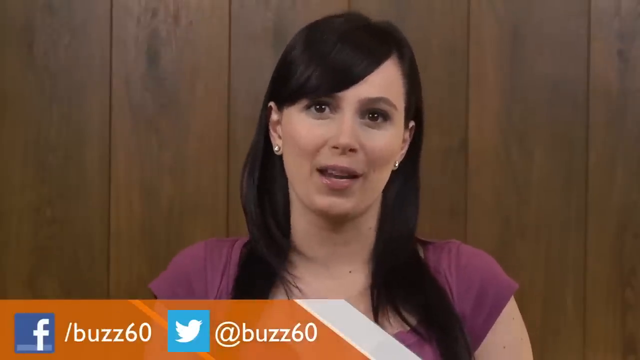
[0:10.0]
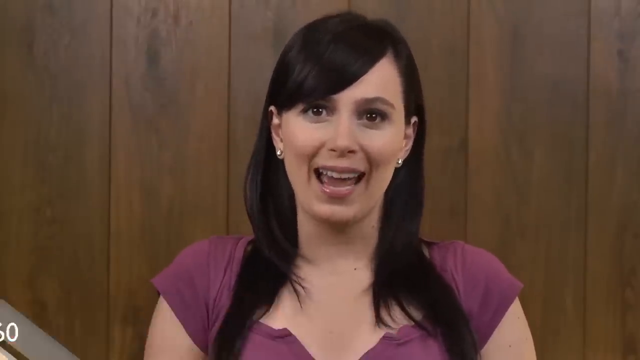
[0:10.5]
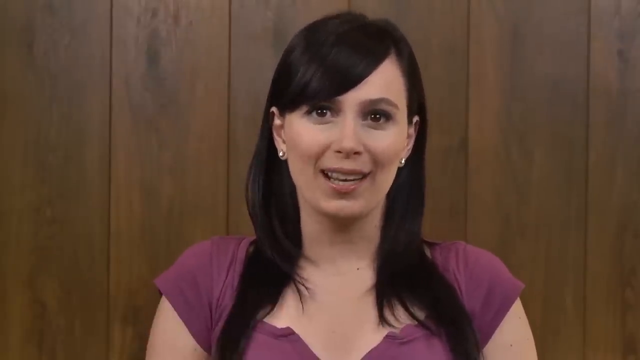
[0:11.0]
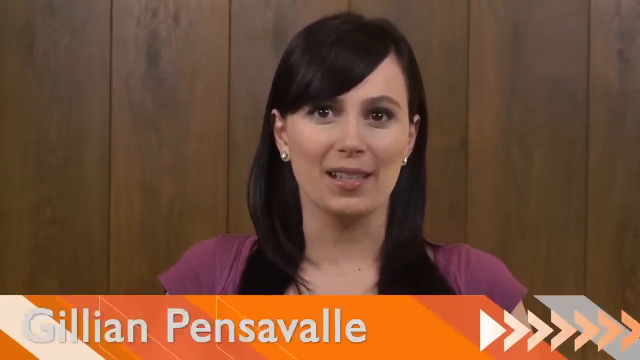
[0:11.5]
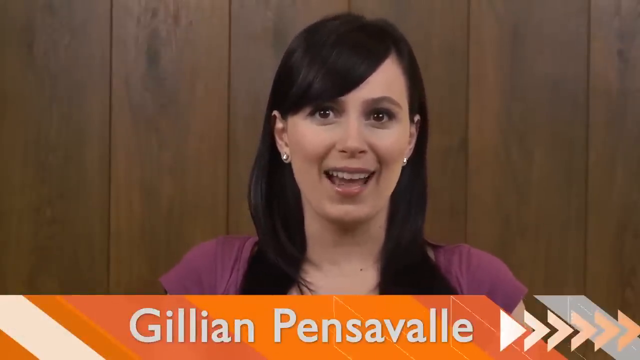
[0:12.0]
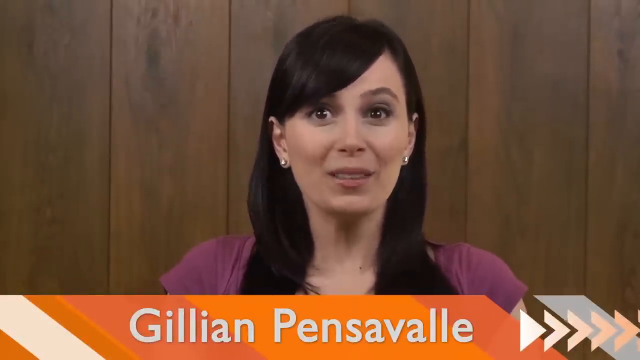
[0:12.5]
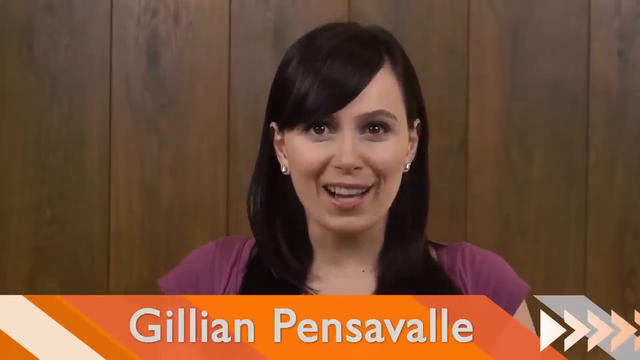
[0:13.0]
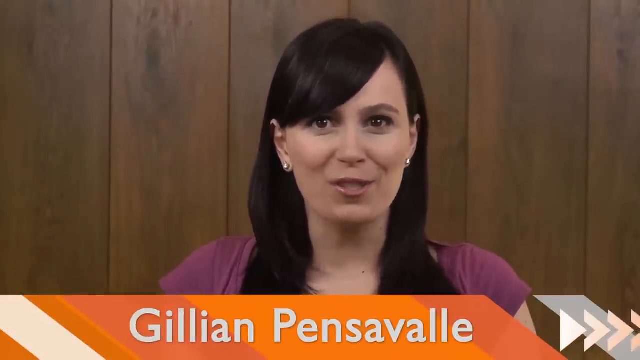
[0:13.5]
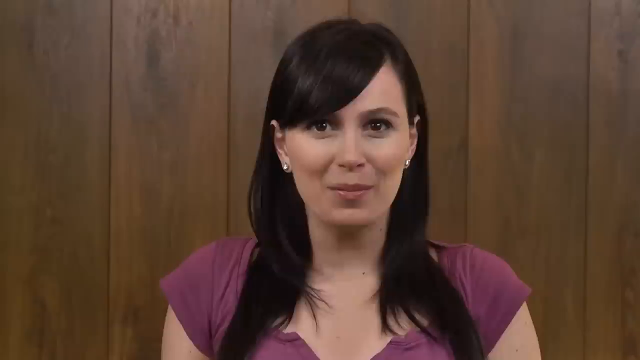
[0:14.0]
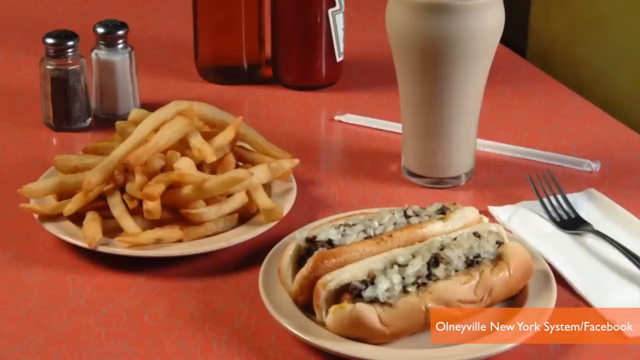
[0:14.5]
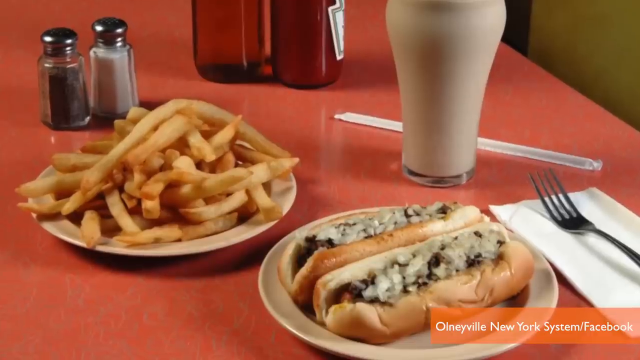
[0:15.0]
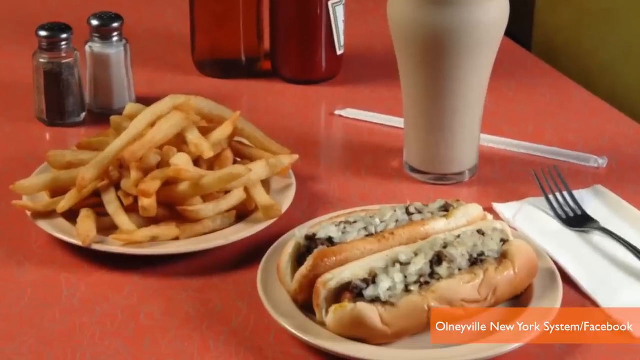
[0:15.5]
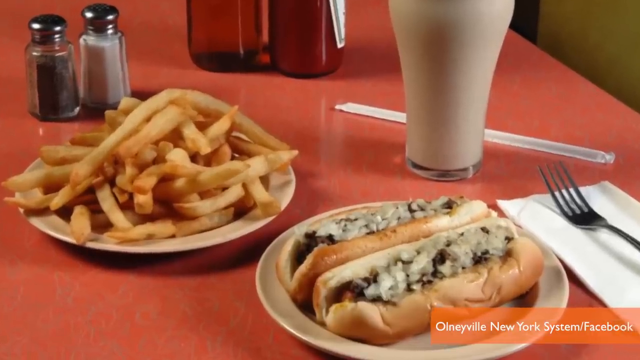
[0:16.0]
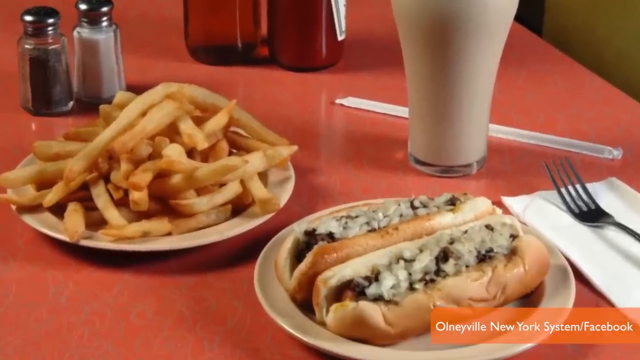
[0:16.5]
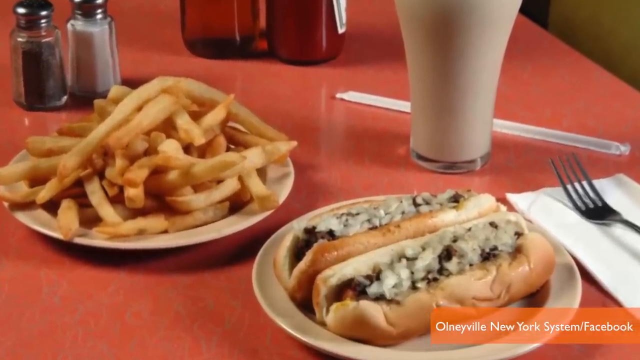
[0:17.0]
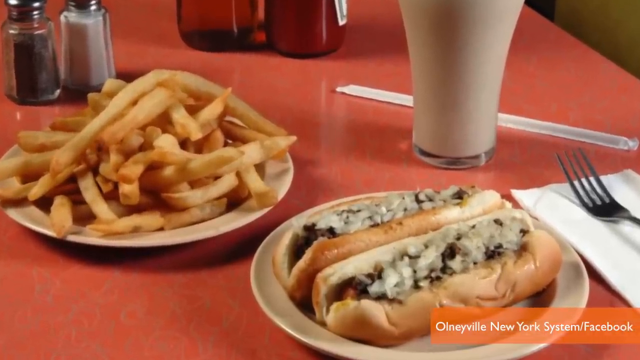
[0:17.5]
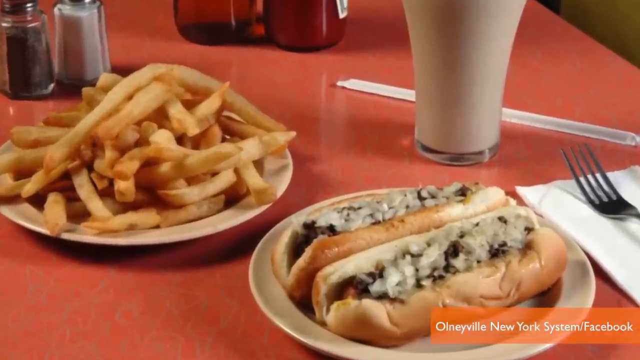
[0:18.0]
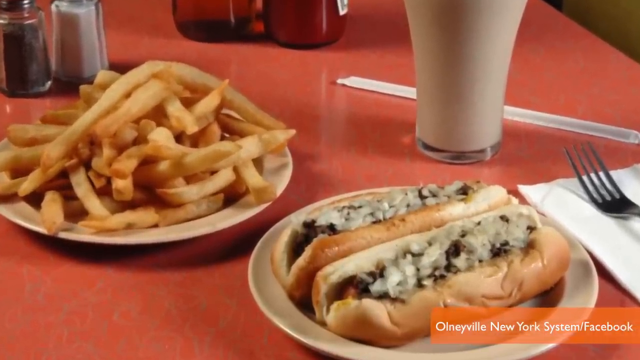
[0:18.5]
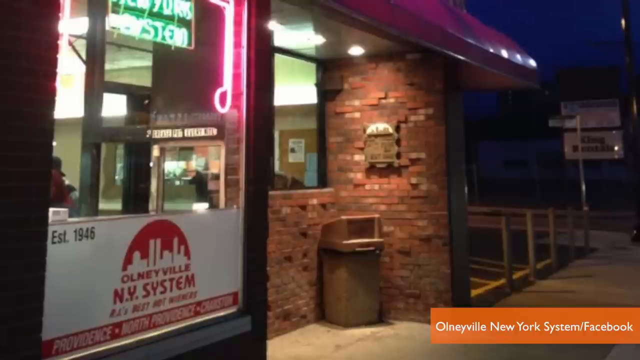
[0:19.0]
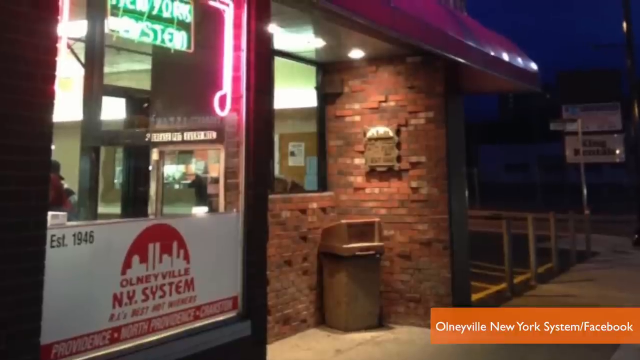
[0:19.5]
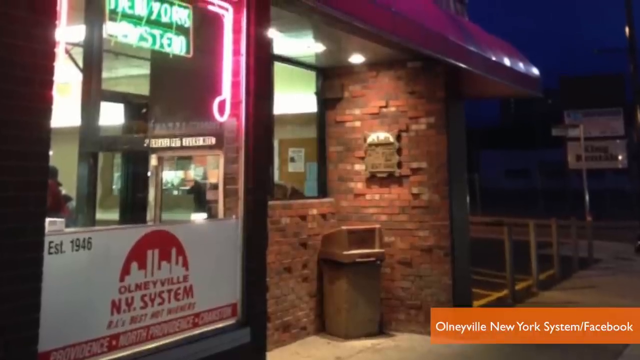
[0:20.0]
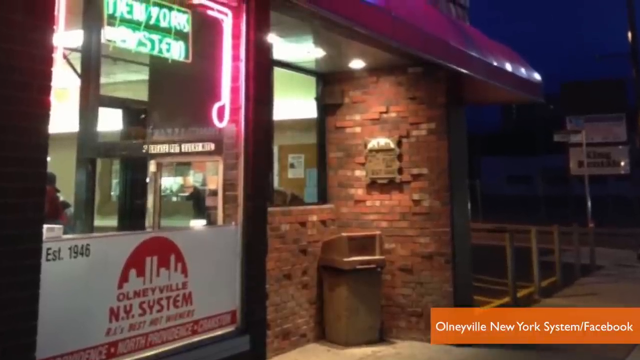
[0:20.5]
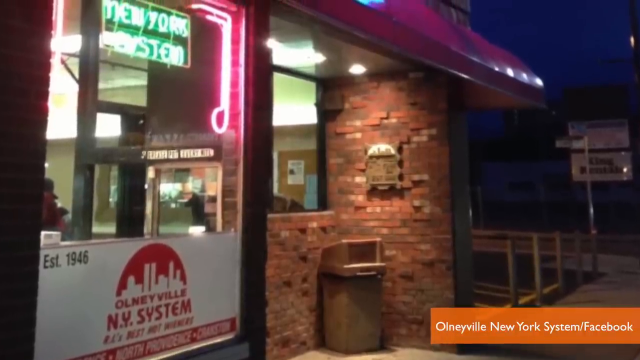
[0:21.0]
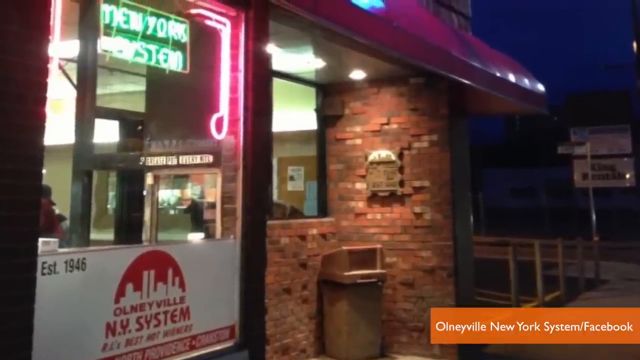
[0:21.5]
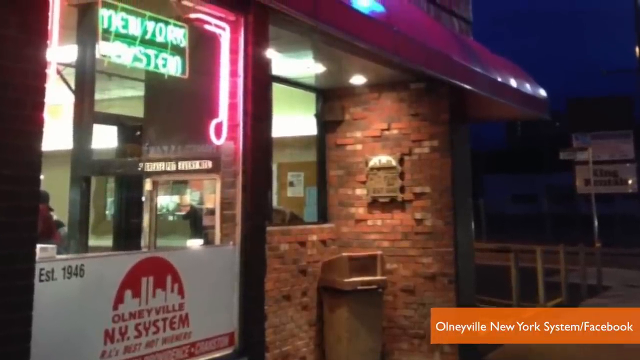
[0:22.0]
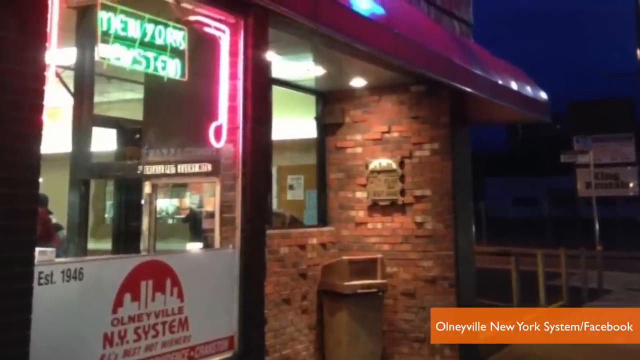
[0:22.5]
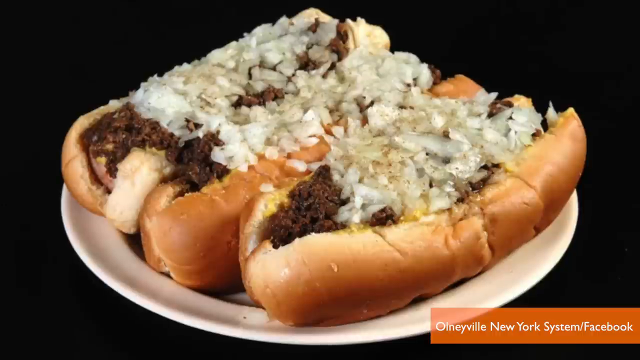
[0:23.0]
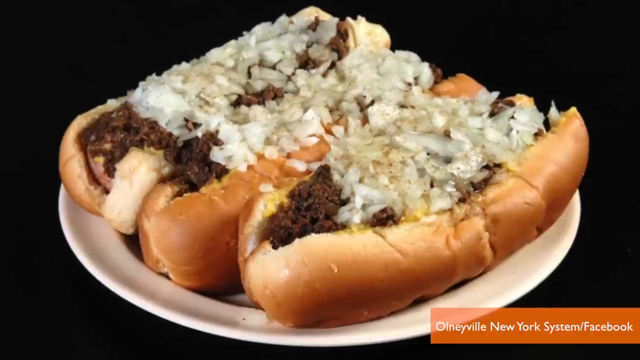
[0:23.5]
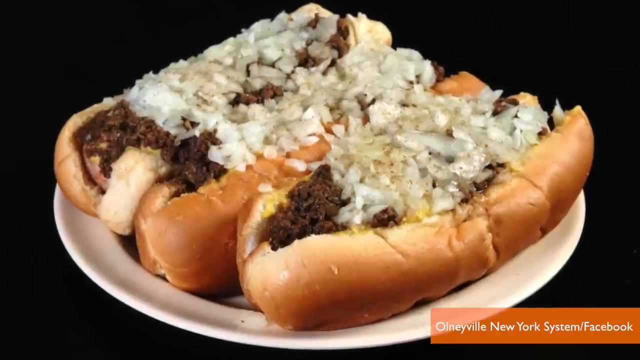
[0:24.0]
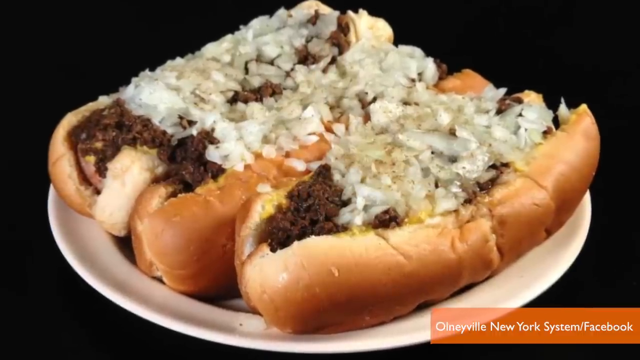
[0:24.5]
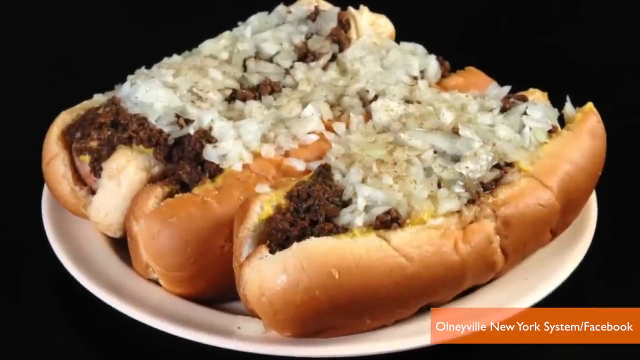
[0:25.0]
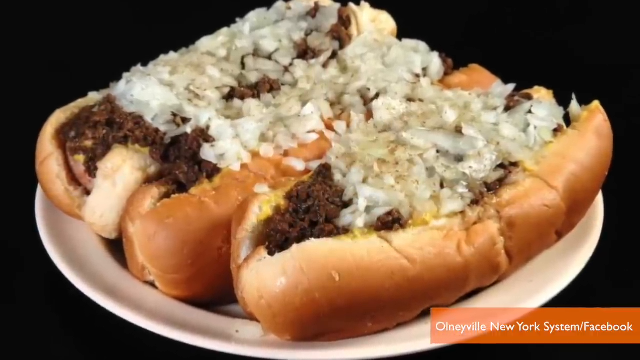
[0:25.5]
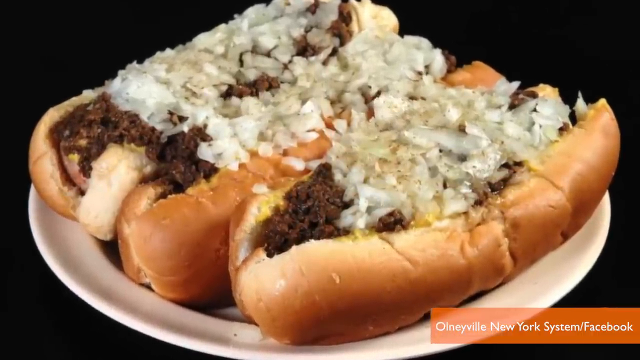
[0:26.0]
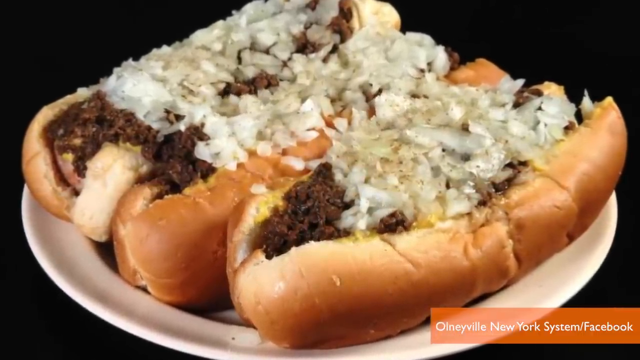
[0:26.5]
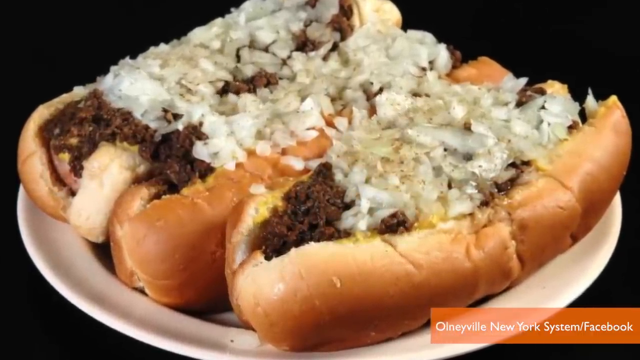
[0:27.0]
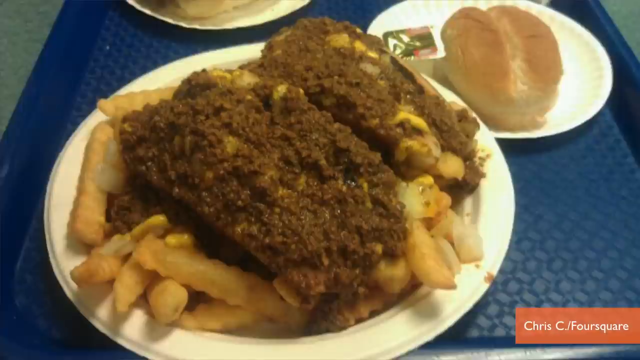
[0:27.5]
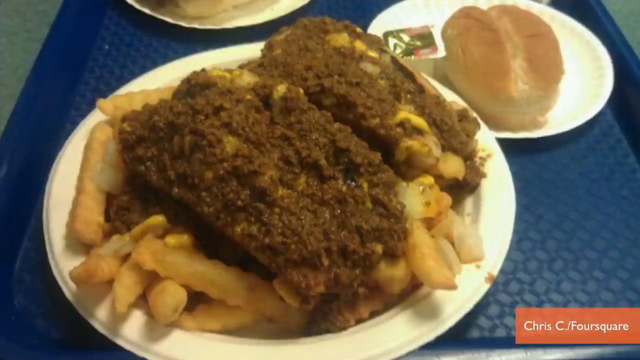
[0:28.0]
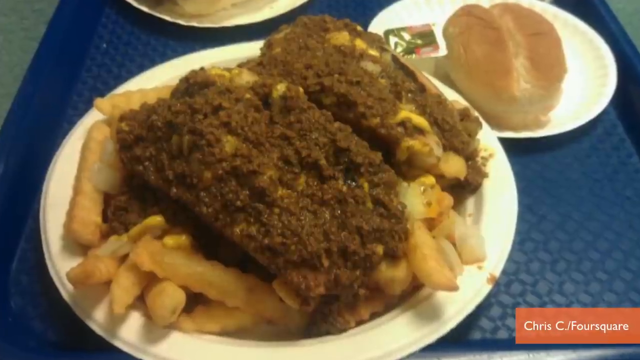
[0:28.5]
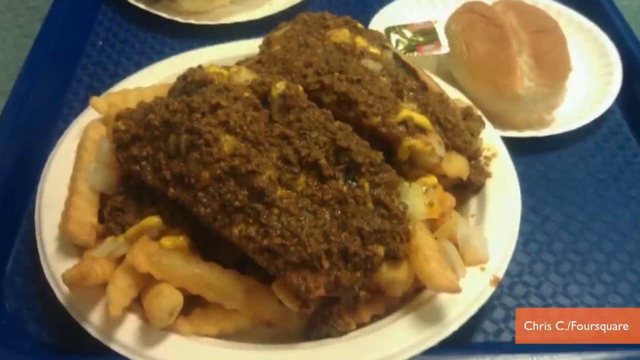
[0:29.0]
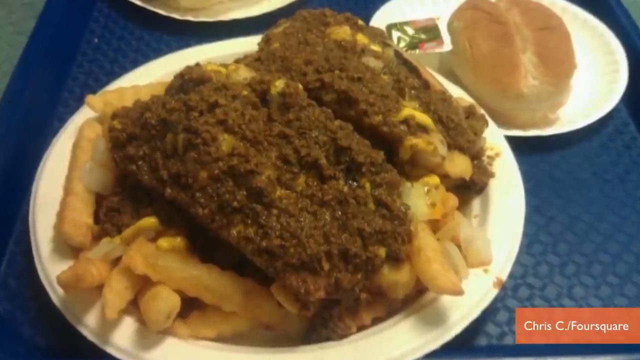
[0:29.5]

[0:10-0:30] Fresh chips and some hot dogs with a milkshake are shown, followed by a hot dog filled with some things. French fries appear with something unidentified on top, possibly mincemeat. The outside of the shop is shown, then three hot dogs filled with things inside. A lady with sparkly eyes and a beautiful smile is talking.